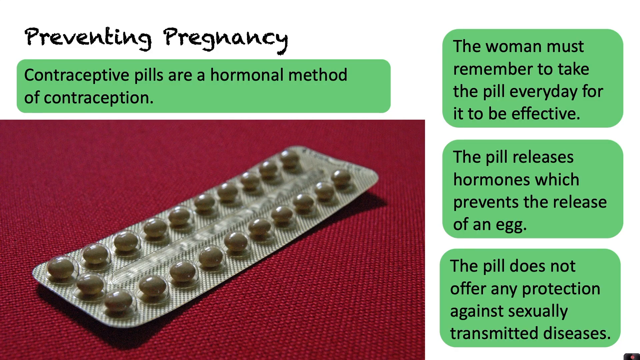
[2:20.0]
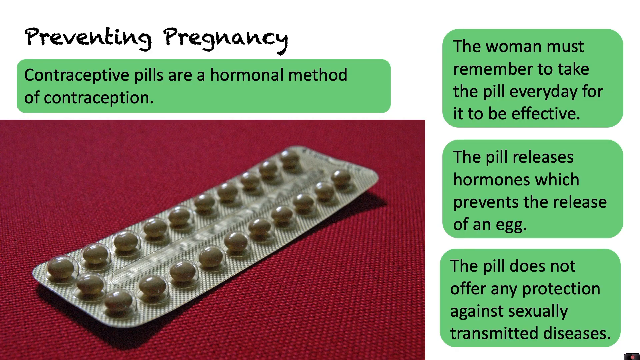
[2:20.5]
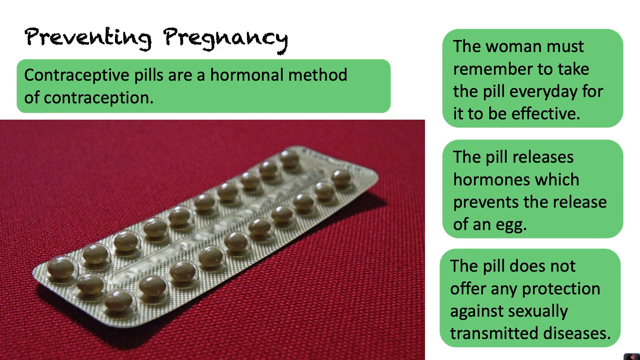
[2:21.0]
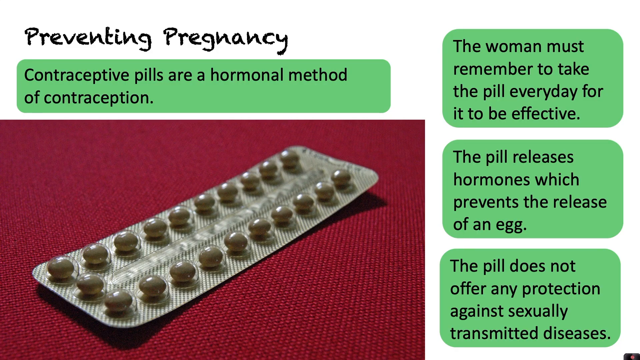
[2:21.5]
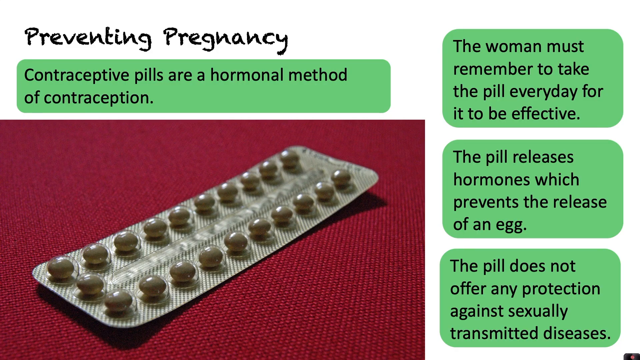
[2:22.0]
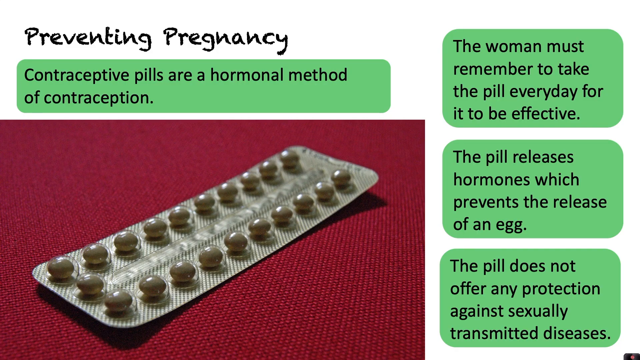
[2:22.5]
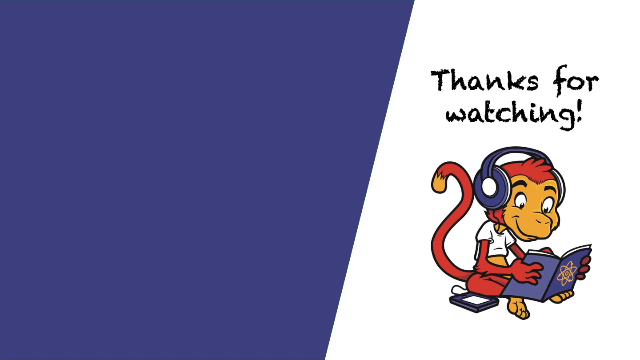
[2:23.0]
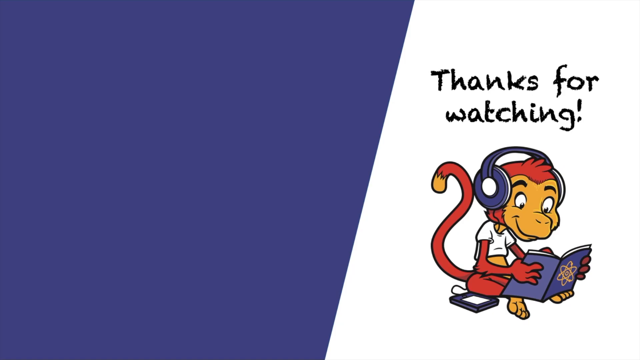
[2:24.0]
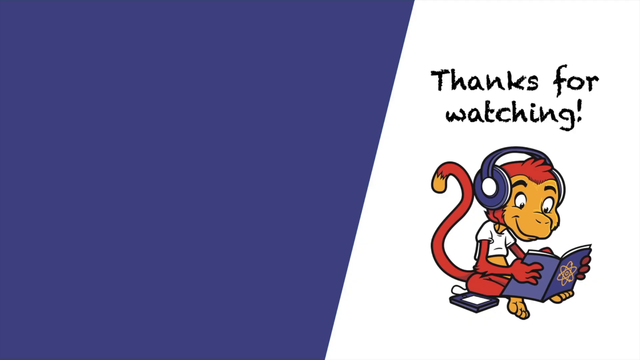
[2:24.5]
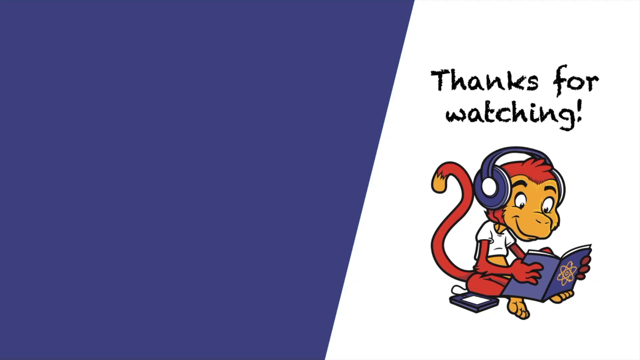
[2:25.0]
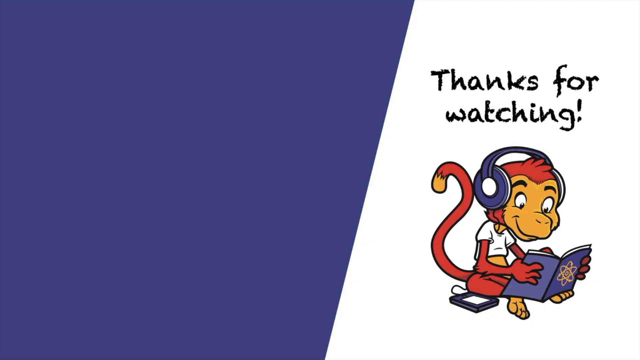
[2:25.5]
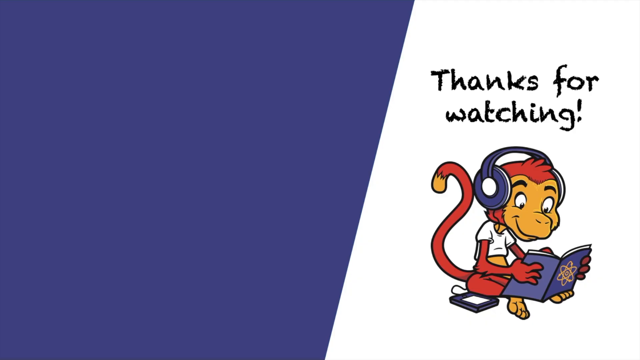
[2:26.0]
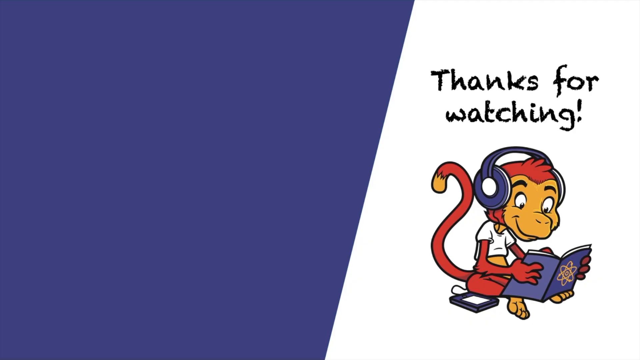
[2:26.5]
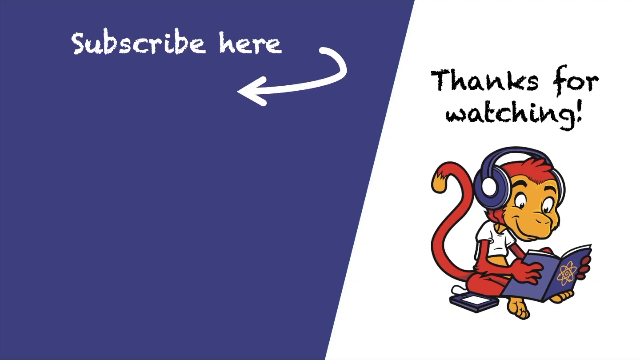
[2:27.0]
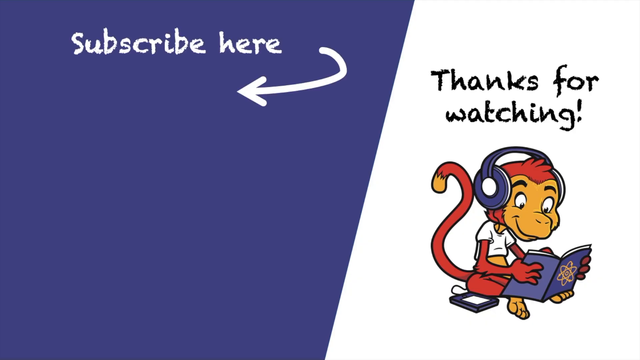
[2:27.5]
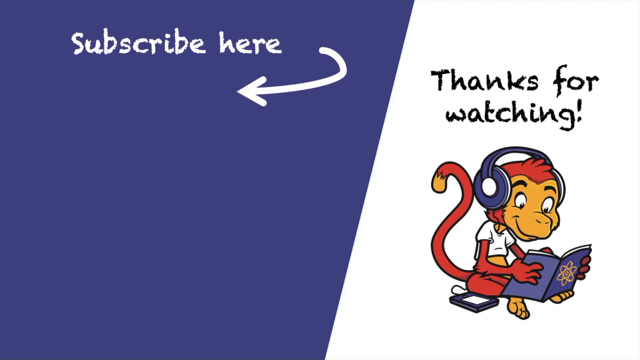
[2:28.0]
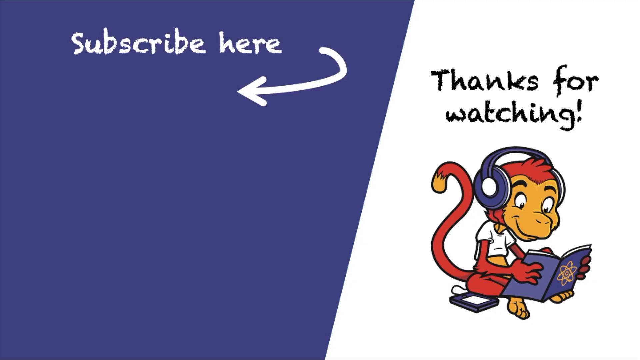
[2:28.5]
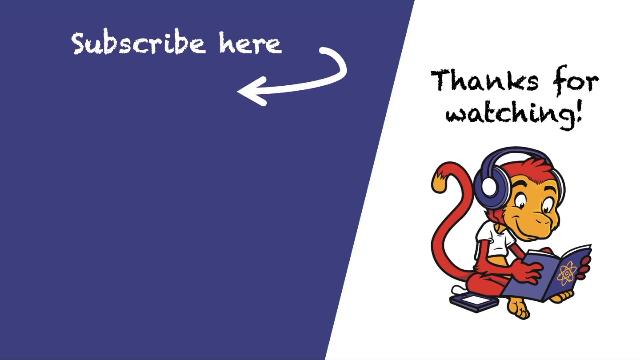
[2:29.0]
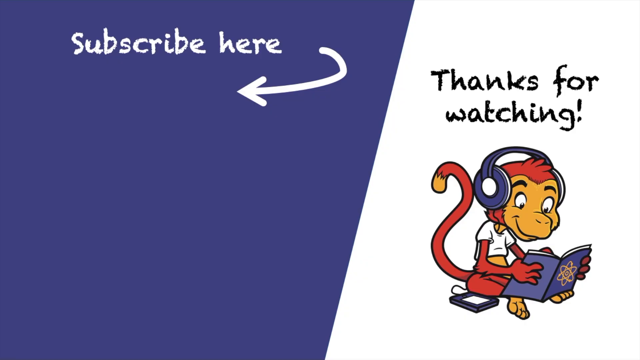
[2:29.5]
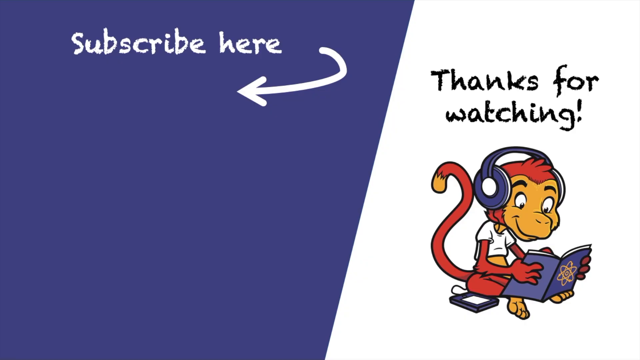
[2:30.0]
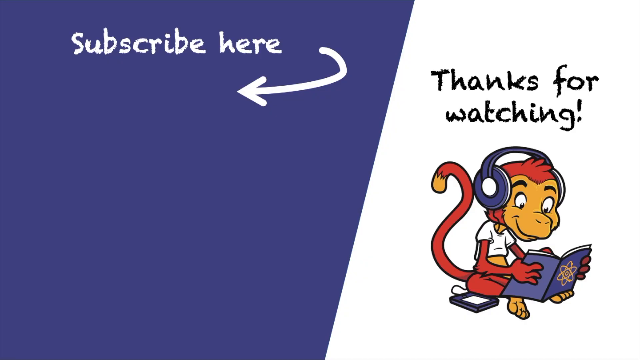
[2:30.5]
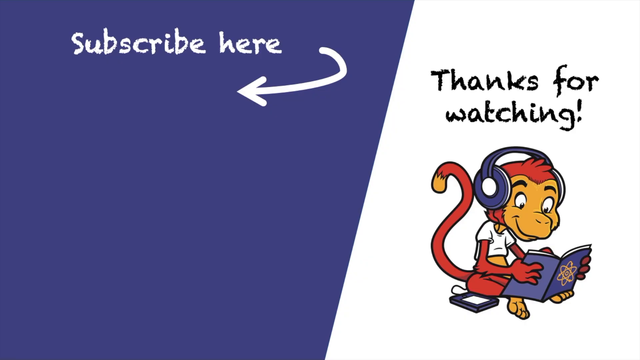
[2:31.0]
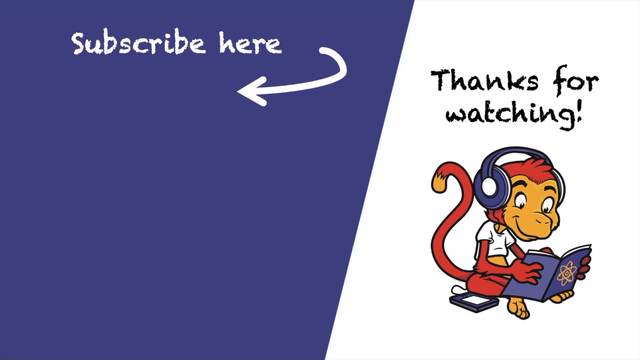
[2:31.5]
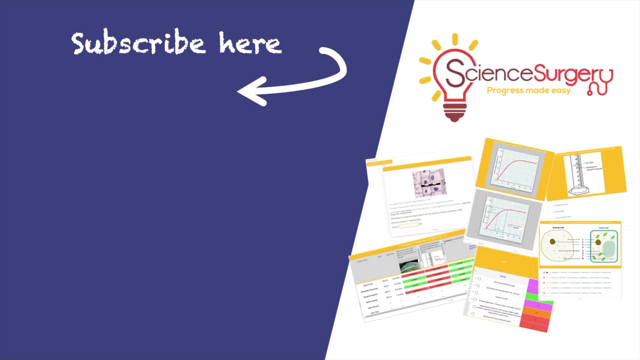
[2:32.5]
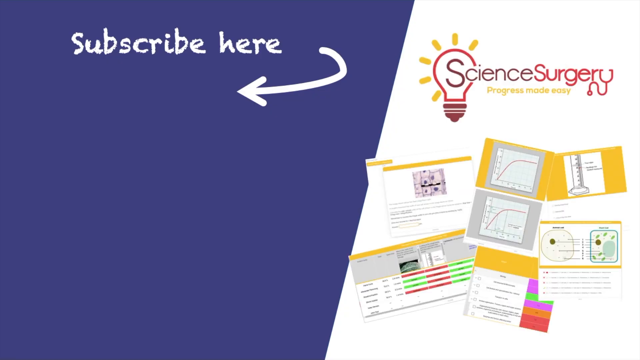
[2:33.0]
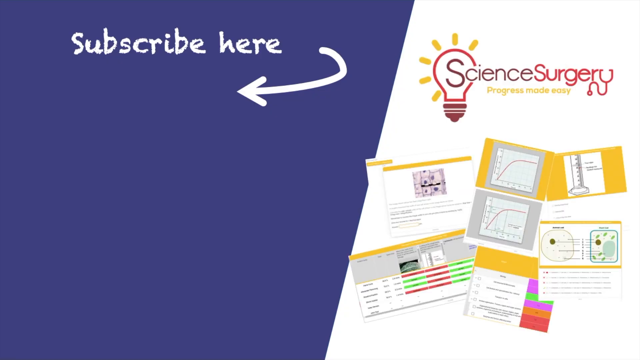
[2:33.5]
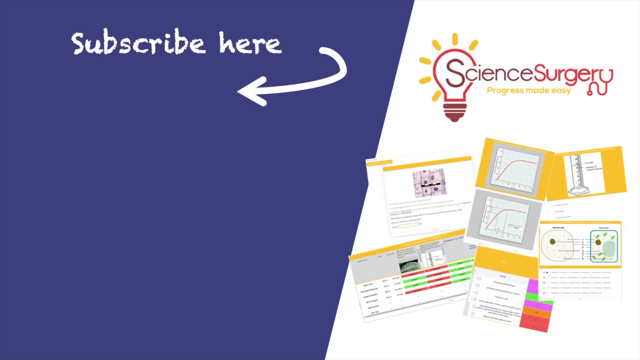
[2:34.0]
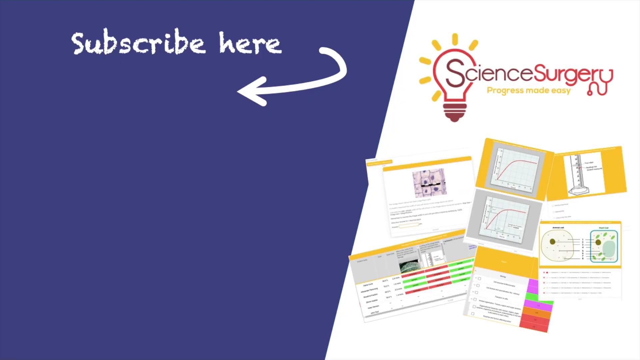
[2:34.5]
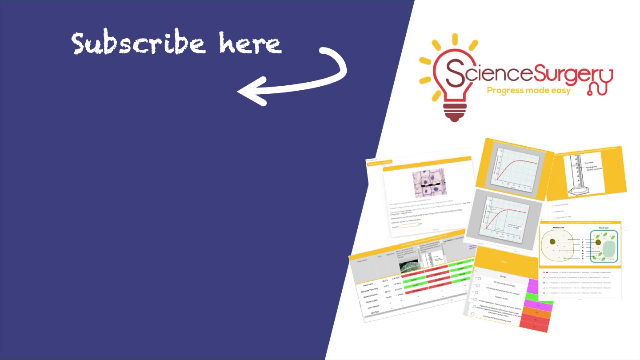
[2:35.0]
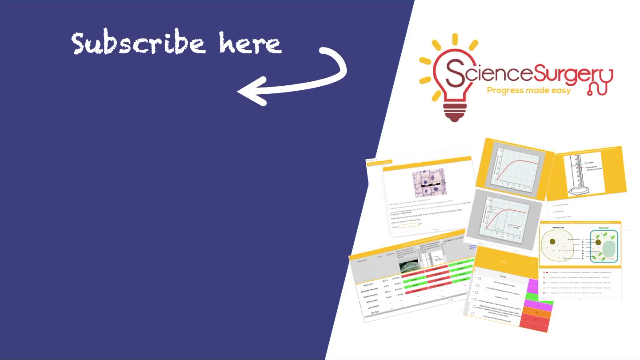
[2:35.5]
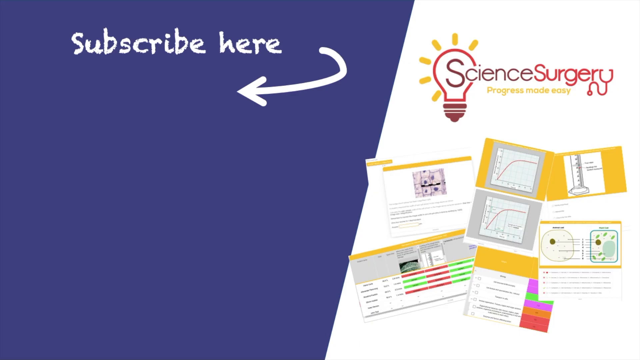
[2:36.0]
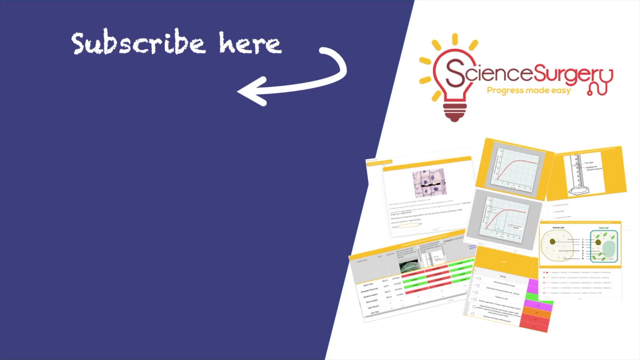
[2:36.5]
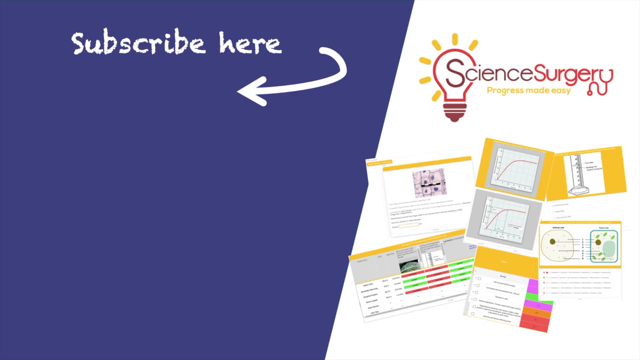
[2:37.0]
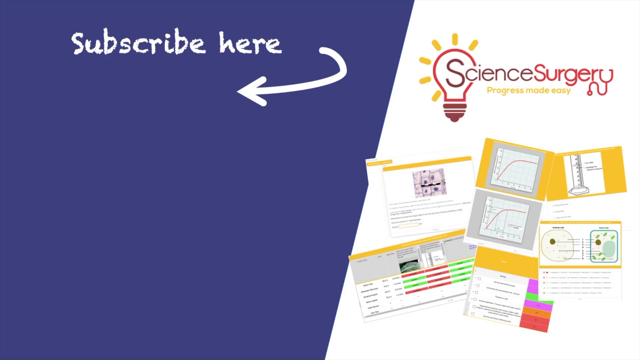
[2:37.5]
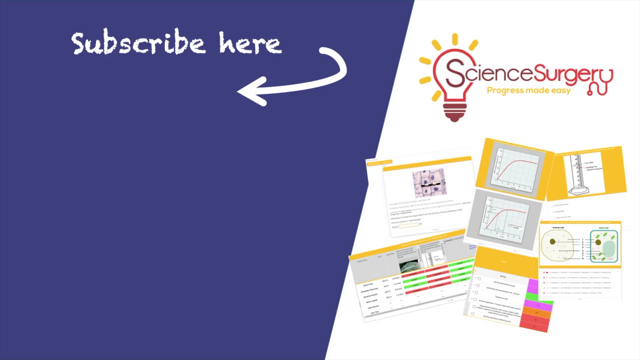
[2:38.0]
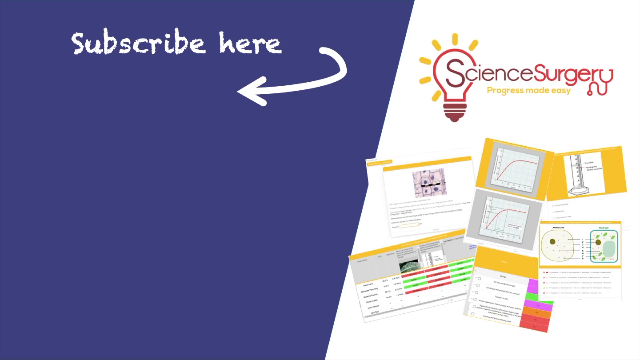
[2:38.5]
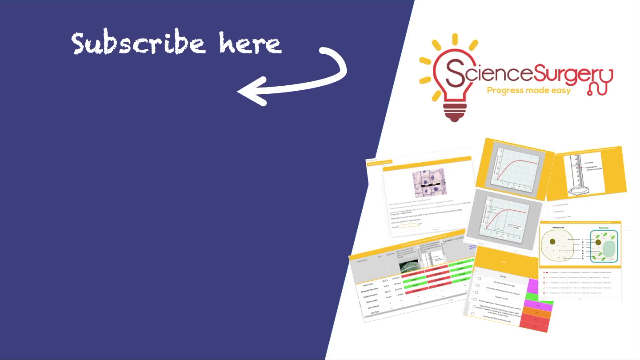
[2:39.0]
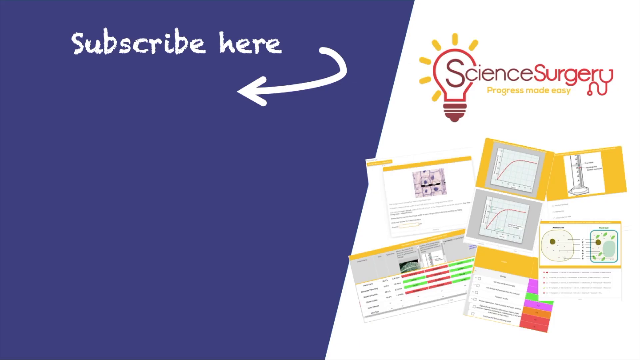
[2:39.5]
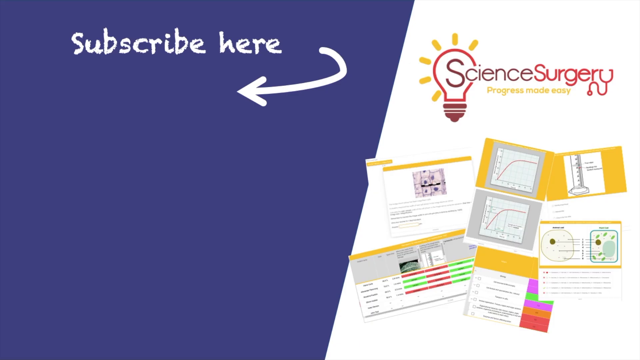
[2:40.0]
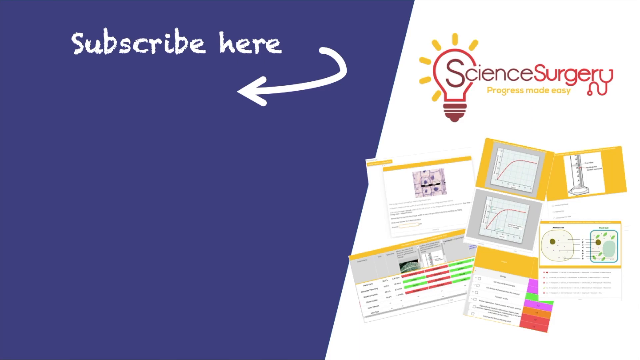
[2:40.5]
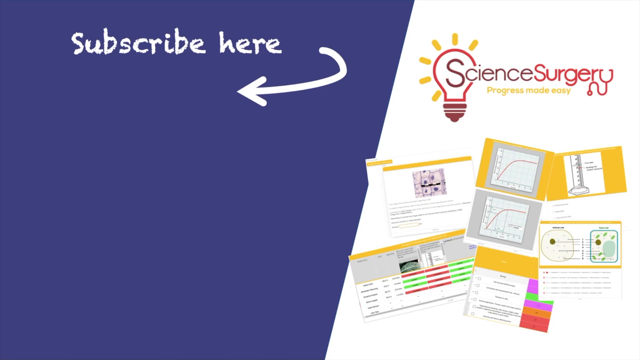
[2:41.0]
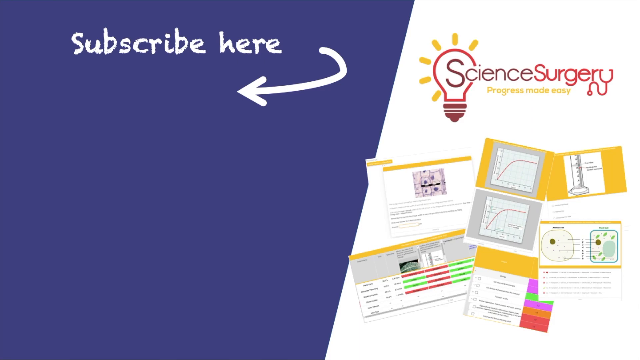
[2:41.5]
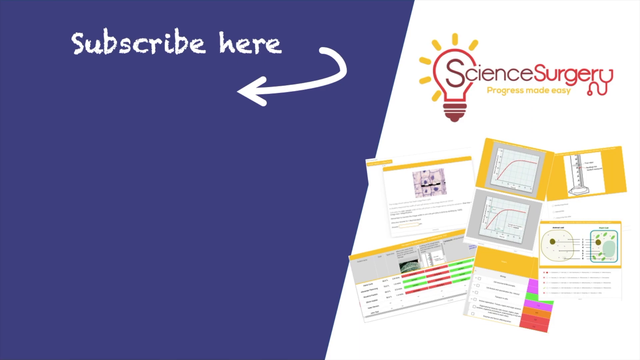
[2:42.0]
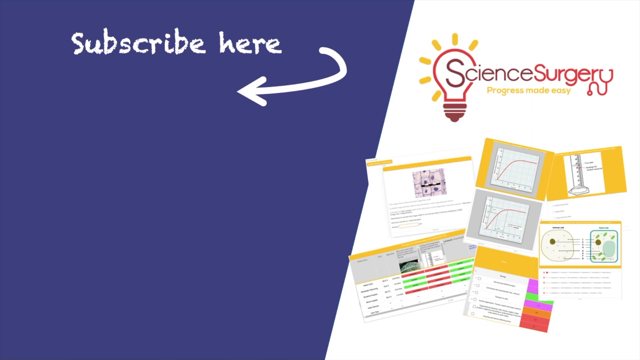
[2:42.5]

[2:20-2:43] A slide with a white background has a black heading in the top left corner reading "Preventing Pregnancy," with a small light green box below it containing black text reading "contraceptive pills are a hormonal method of contraception." On the right side of the screen, three green boxes go down: the top one reads "The woman must remember to take the pill every day for it to be effective," the next reads "the pill releases hormones which prevents the release of an egg," and the third reads "the pill does not offer any protection against sexually transmitted diseases." On the bottom left of the screen is a large image of a strip of birth control showing two rows of small, round, gray pills laying on some type of red fabric surface. The screen then changes to a diagonal split screen, dark purple on the left and white on the right. At the top of the left side, white letters read "subscribe here" with an arrow pointing to the left. On the right side, black text reads "thanks for watching," and beneath it is a cartoon monkey wearing a white t-shirt and blue headphones, sitting down reading a blue covered book, with a blue smartphone or some type of mobile device laying next to him. The image on the white side then changes: at the top is a logo for Science Surgery showing a lightbulb and the text "Science Surgery," with yellow text below reading "Progress Made Easy." Beneath that are images of what look like different documents or screenshots with lots of charts, graphs and informational style content.